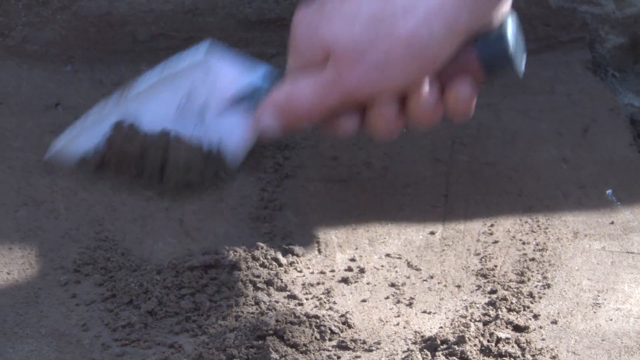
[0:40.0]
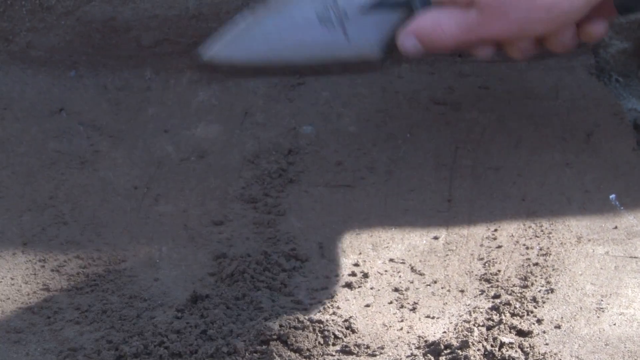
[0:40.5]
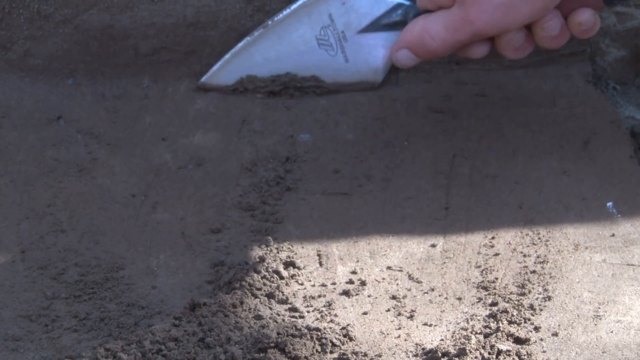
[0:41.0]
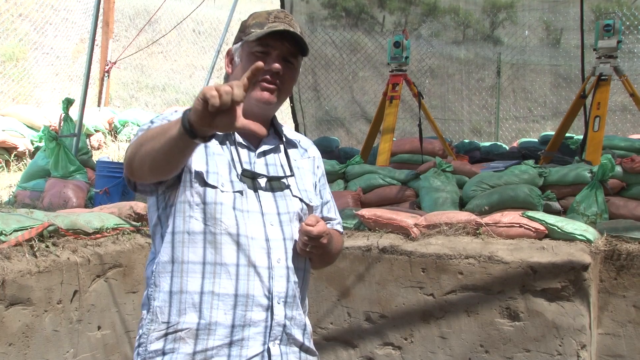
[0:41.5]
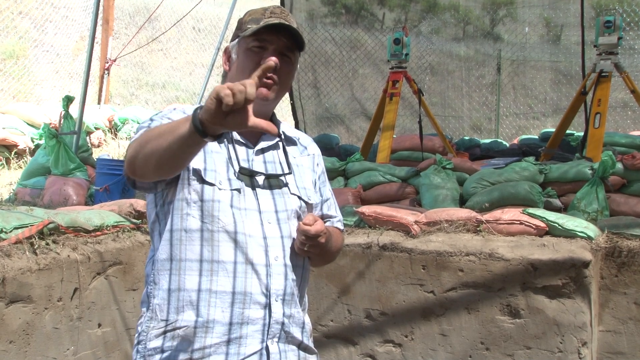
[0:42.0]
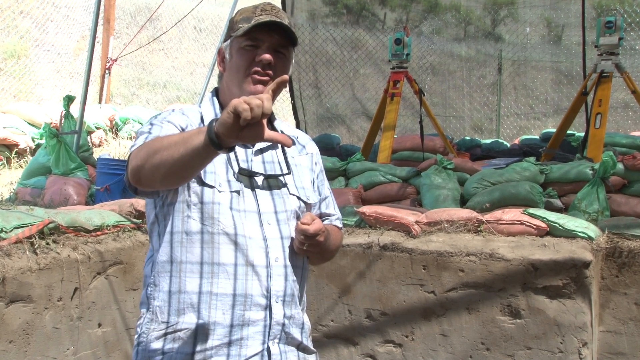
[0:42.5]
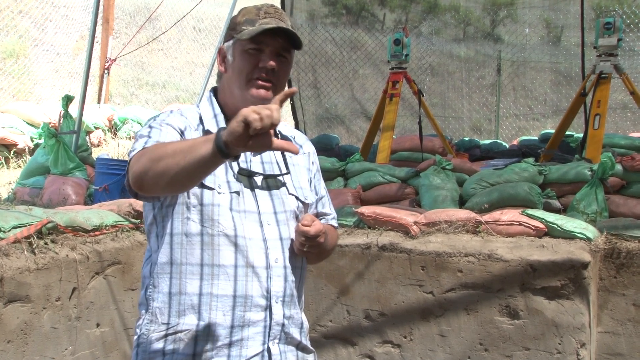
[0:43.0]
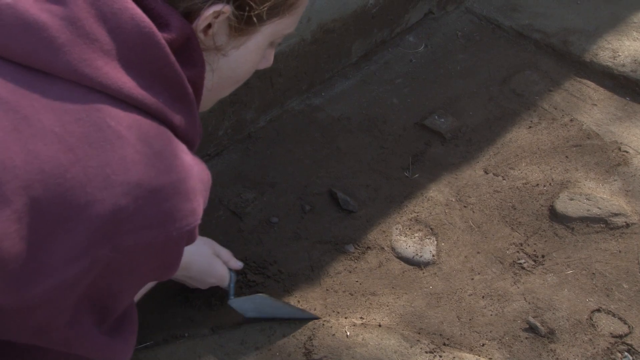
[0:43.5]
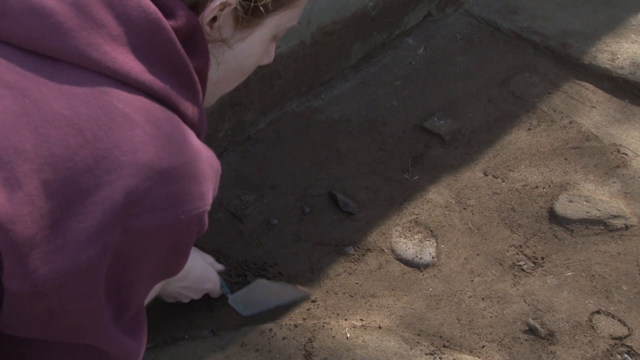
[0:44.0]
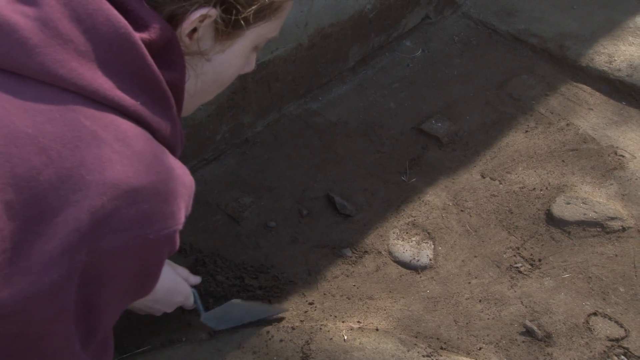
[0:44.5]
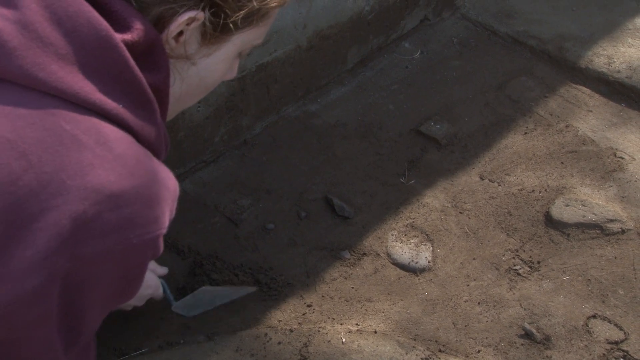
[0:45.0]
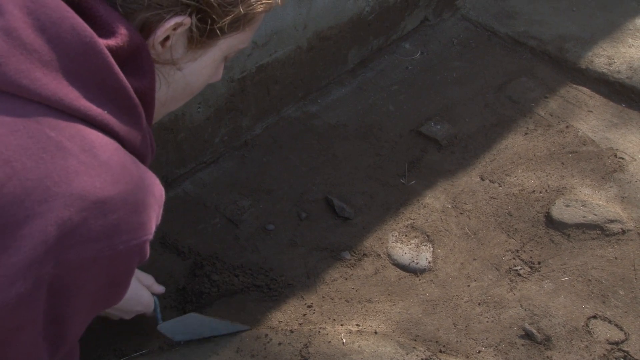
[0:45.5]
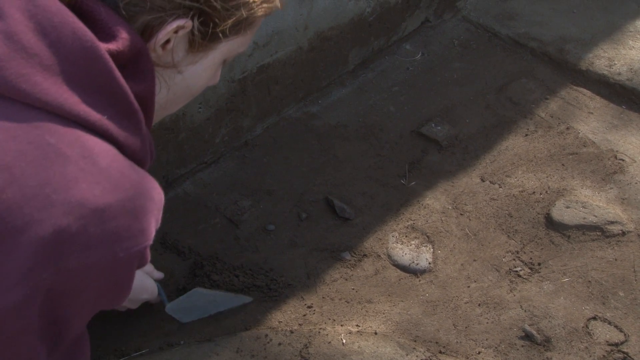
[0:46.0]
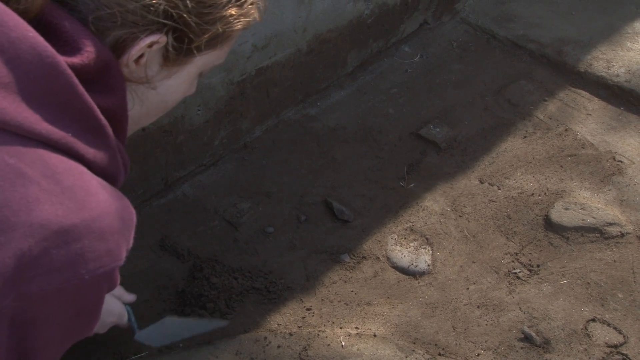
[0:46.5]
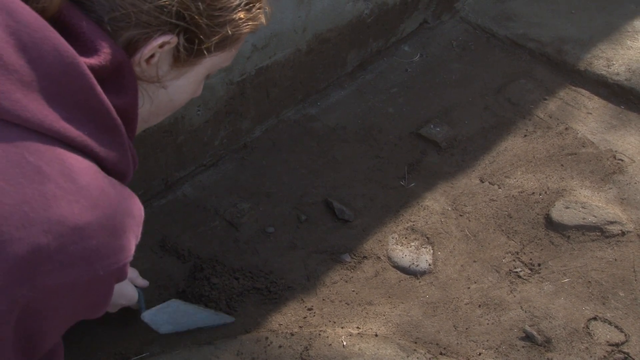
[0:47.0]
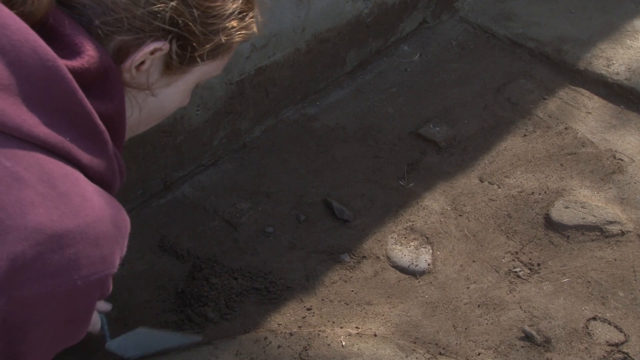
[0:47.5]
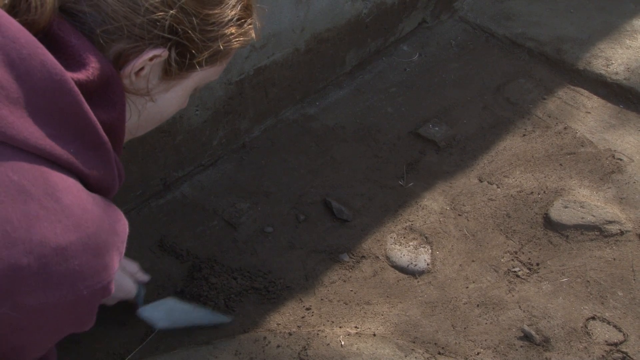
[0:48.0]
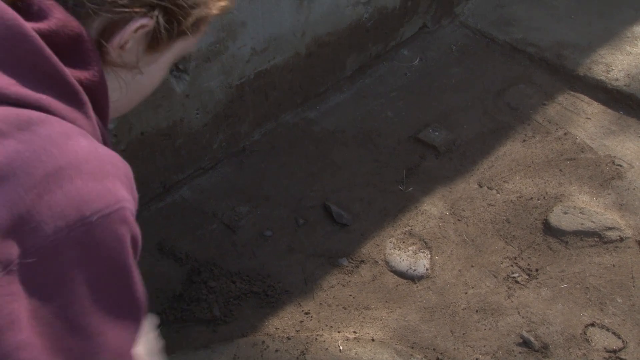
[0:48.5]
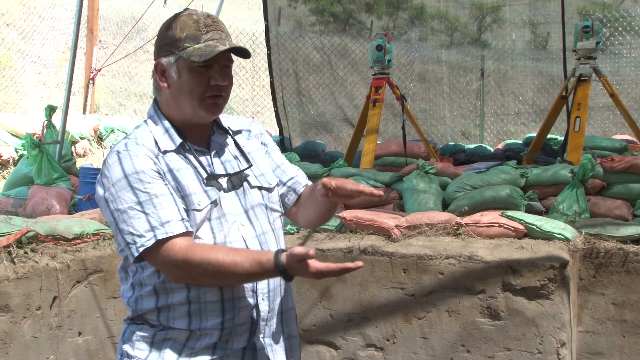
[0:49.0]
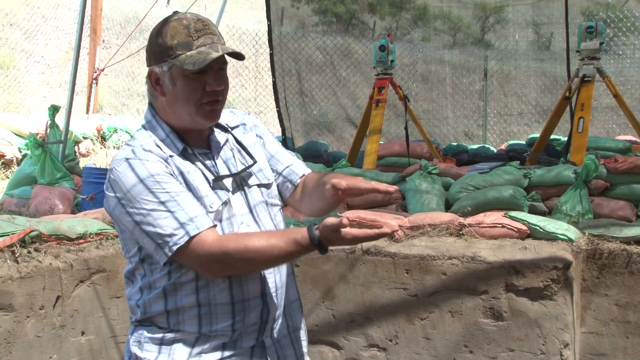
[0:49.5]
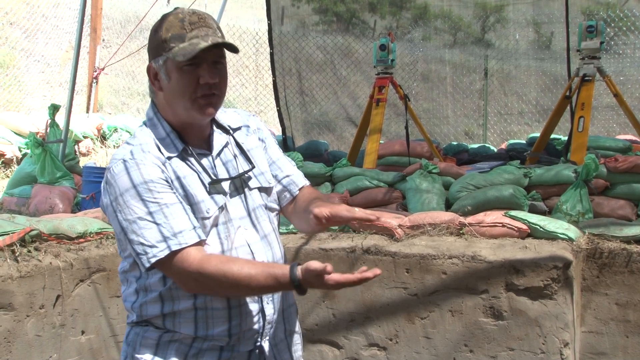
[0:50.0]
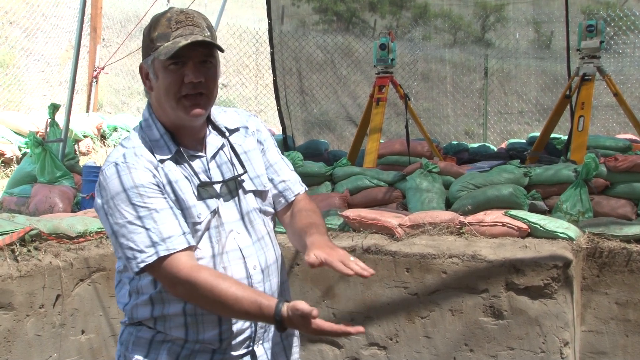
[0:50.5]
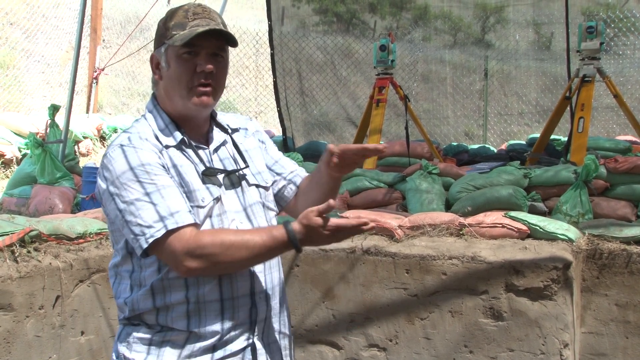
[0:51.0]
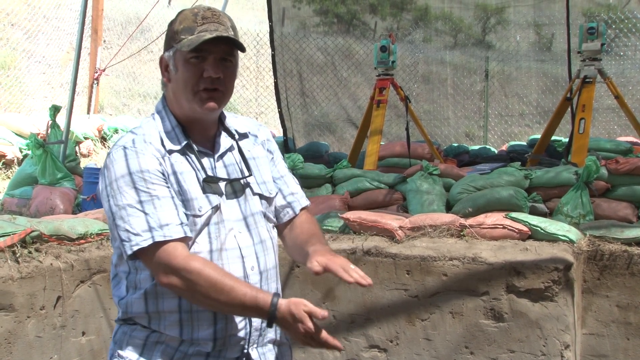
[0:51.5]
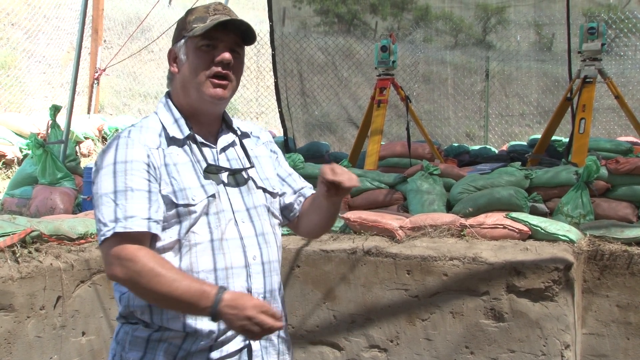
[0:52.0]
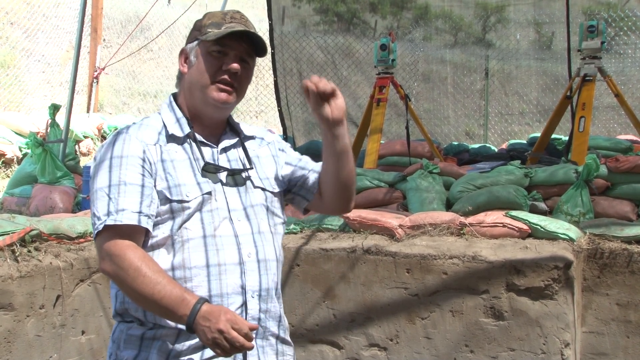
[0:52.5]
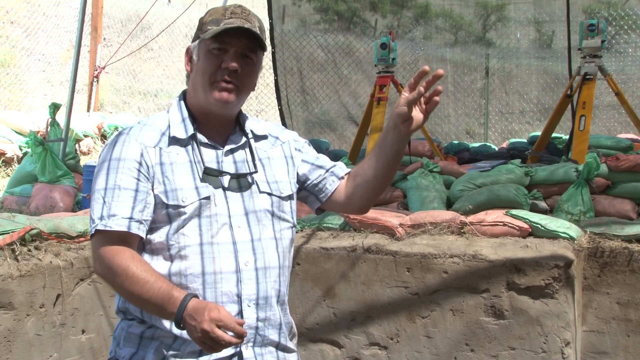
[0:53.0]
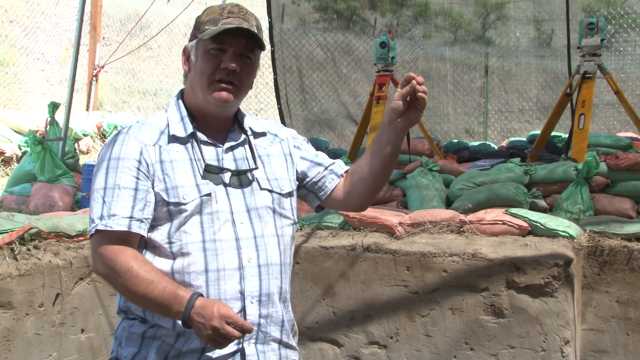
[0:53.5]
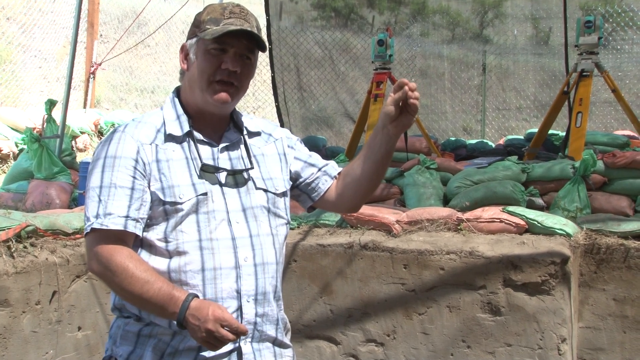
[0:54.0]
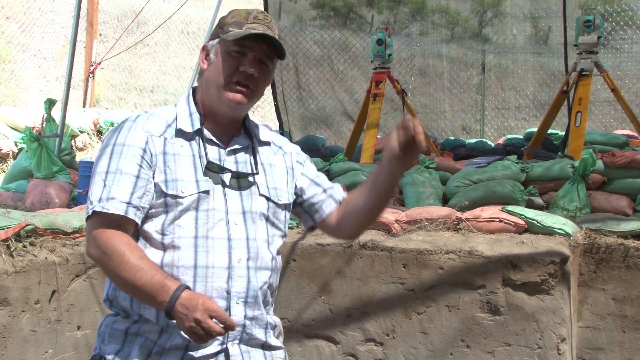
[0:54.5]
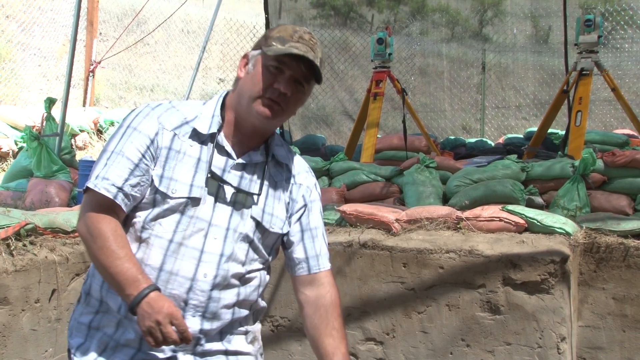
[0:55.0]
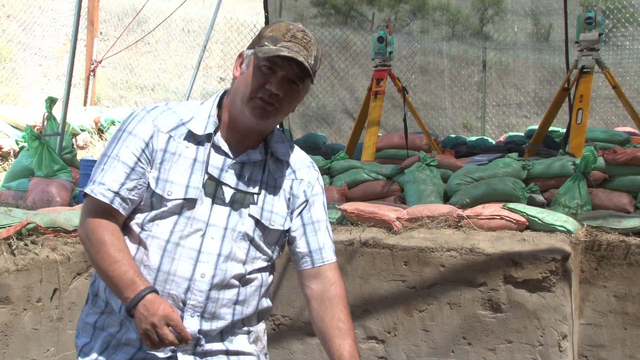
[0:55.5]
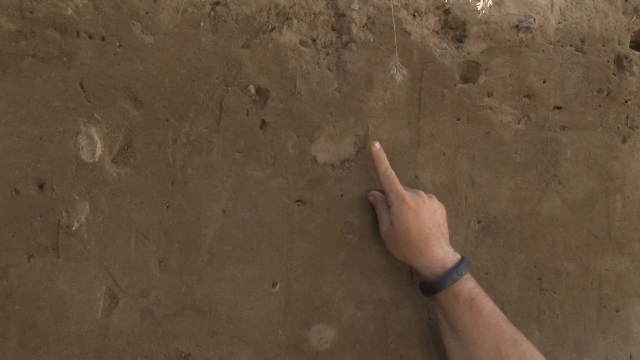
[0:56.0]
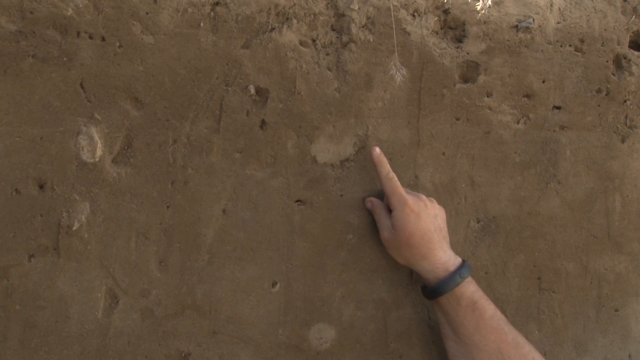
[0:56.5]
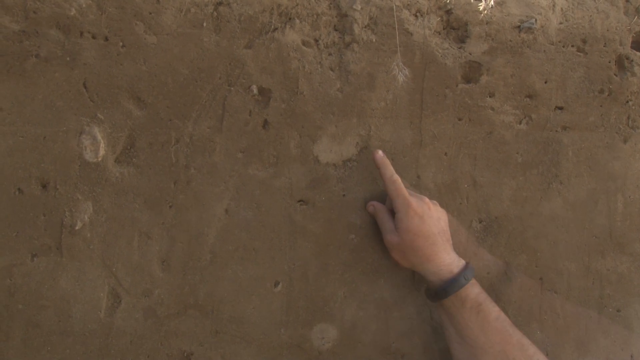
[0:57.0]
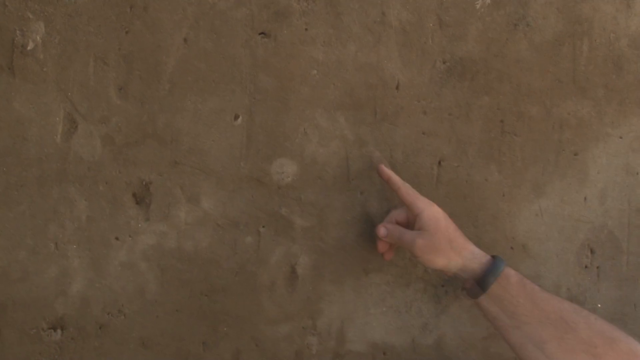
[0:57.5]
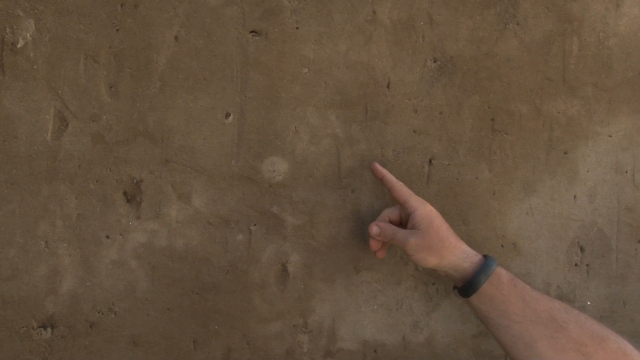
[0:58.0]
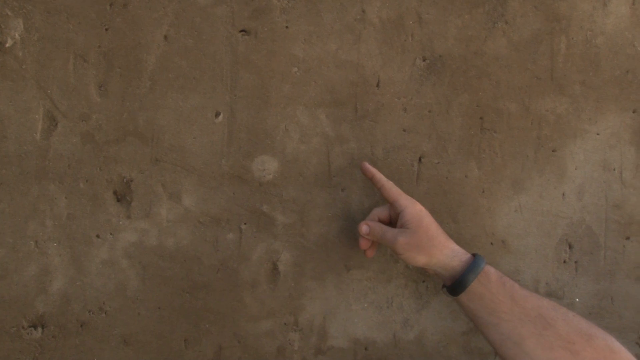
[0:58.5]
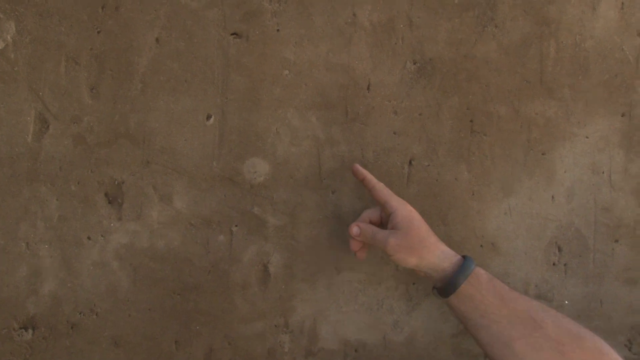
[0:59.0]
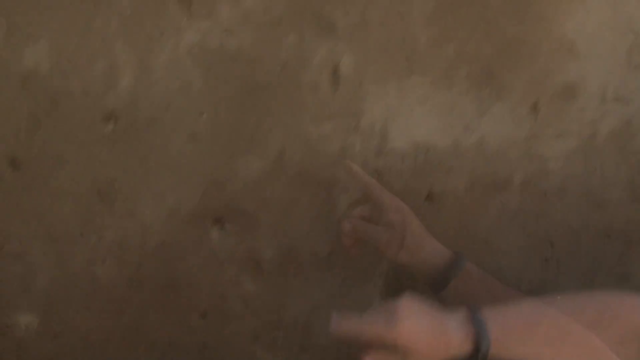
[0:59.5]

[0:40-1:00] A garden trowel scrapes up some dirt as one of the students works. The view cuts to the professor, then back to the students, including a lady student in a kind of purple outfit, and what looks like rocks. The professor continues talking, and someone points to the wall or the ground; the view stops where the ladle is. Bags in the back look like sandbags: some red, most green, maybe a couple blue, along with something that looks like camera tripods. The metal ladles dig slowly into the dirt, not too deep, basically scraping the surface. A little netting is visible in the back. It is a sunny day, with possibly a few clouds in the sky.